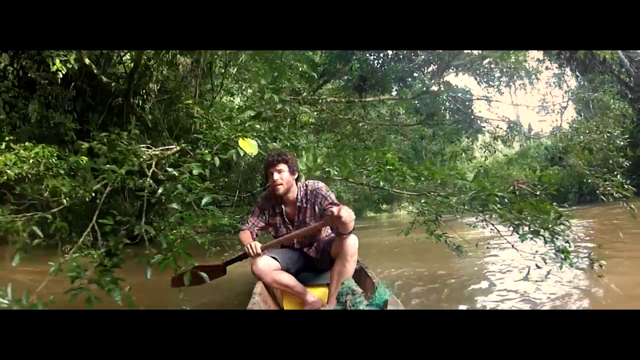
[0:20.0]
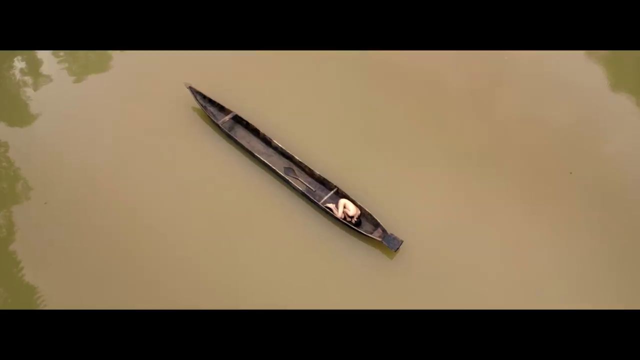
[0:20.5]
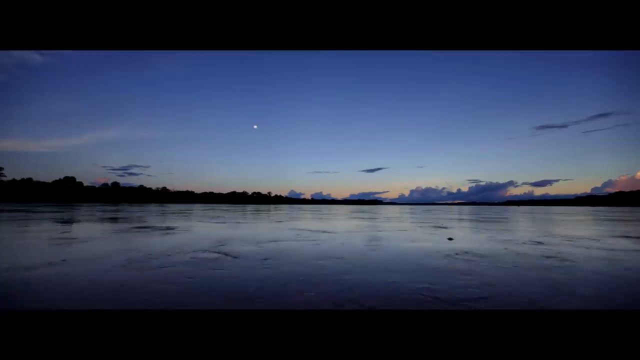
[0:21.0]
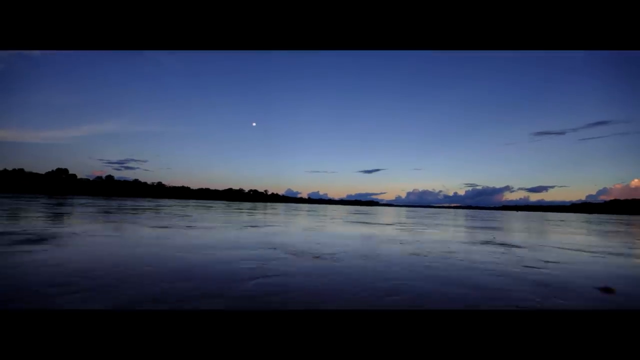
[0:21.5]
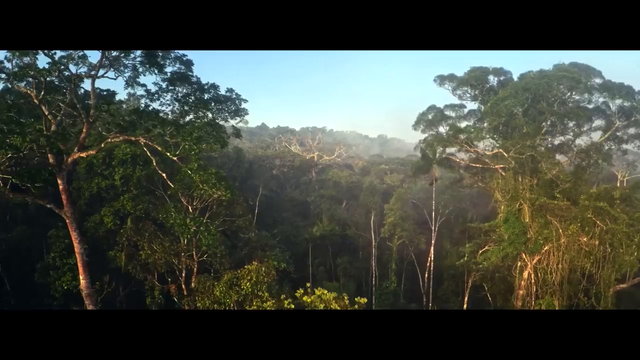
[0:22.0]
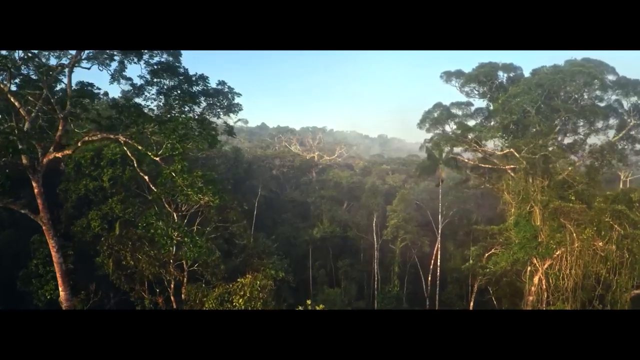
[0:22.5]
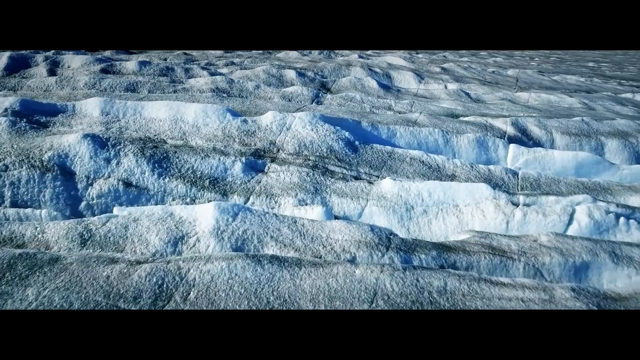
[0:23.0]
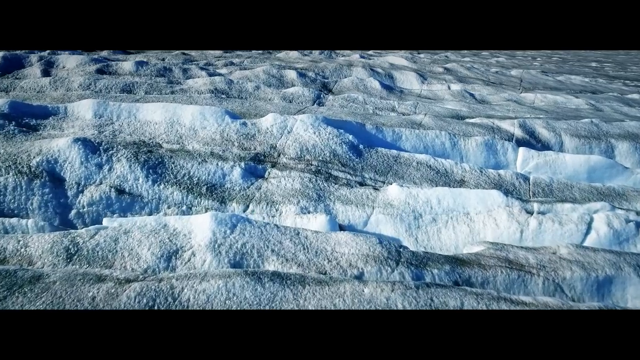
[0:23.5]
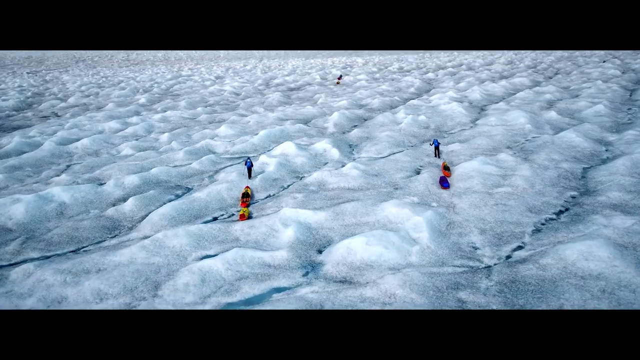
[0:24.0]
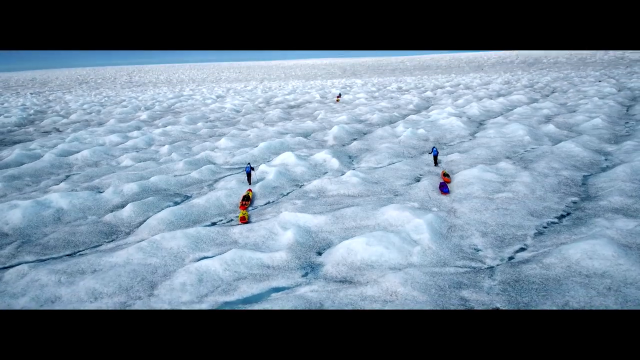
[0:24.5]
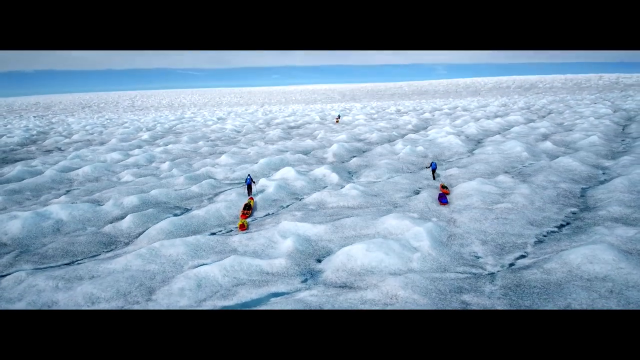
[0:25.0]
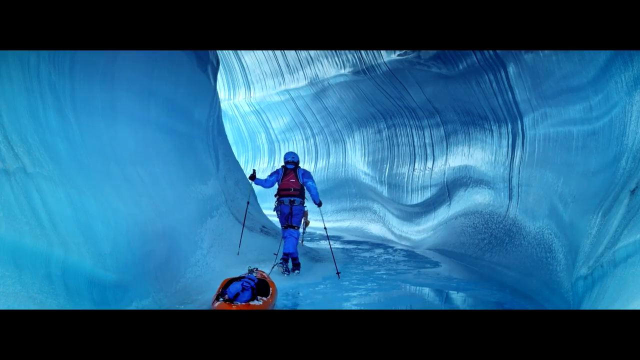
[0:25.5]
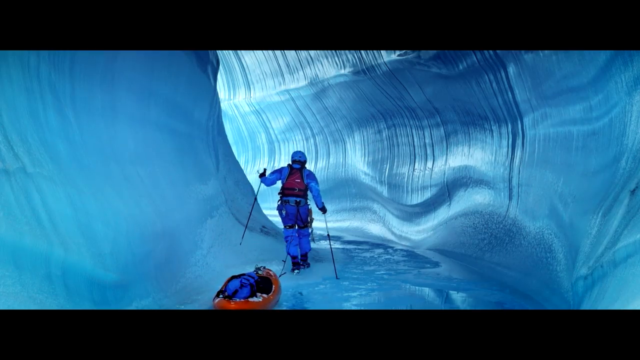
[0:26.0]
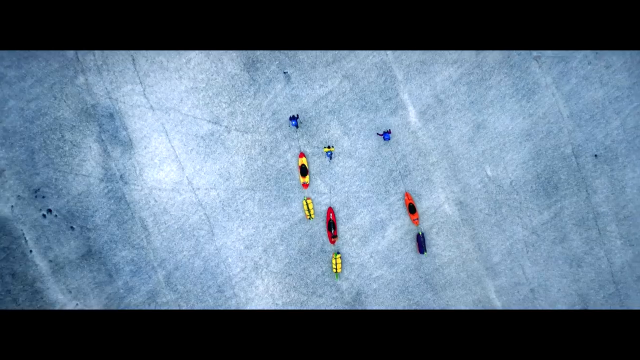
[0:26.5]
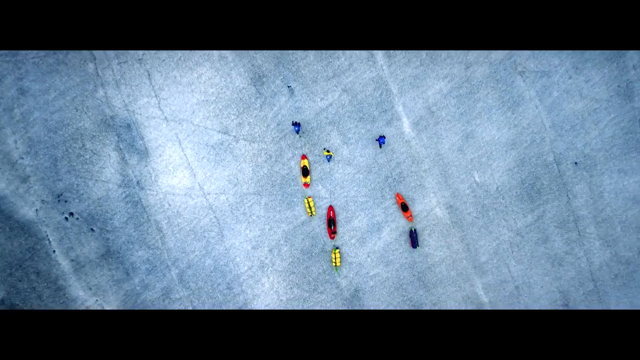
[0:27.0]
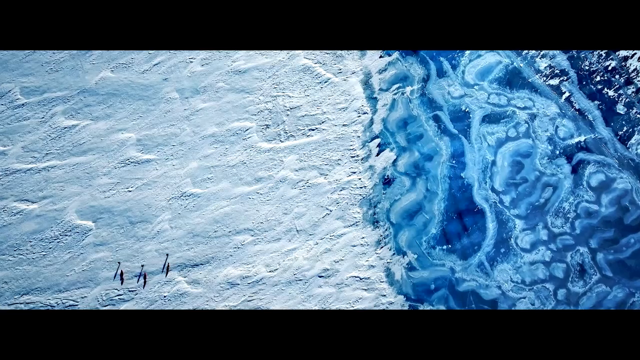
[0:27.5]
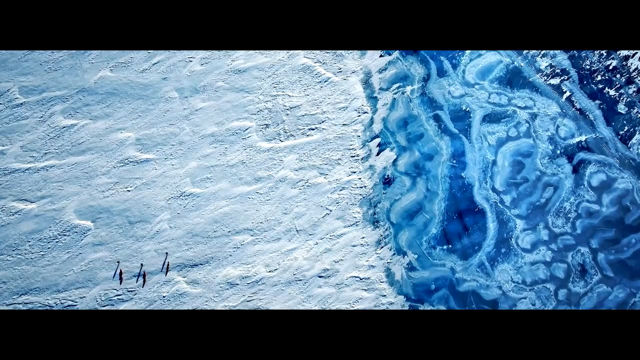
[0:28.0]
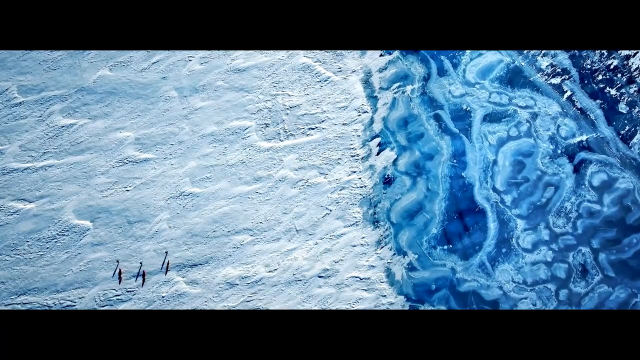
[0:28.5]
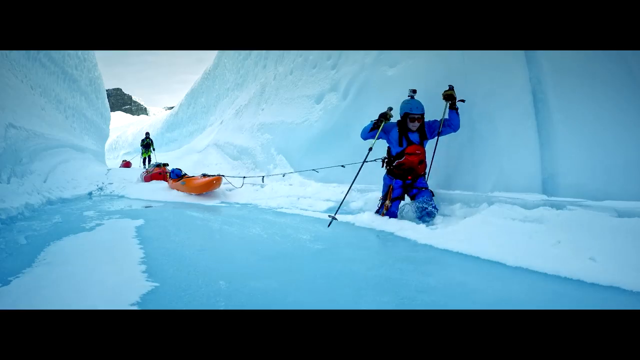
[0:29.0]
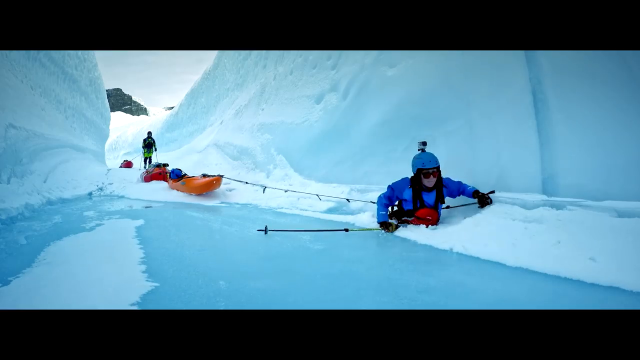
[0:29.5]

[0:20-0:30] The muddy water of the river appears with a very long kayak-looking ship, inside which a naked person is lying down. A video taken on the water moves through it very fast, almost as if attached to a ship; it seems to be set right after sunset, with the sky darkening. A very brief shot of a forest is followed immediately by an icy landscape, where four people walk. Another person walks in the middle of a glacier, with a human-made pathway in the middle. An aerial shot shows some people walking on ice. In another shot, people walk on ice with tall walls of snow around them, and the person closest to the camera falls into the water.